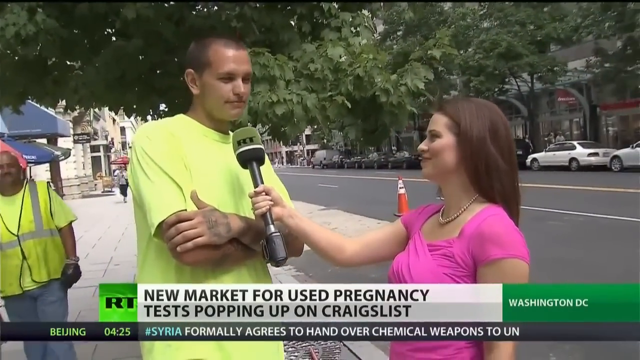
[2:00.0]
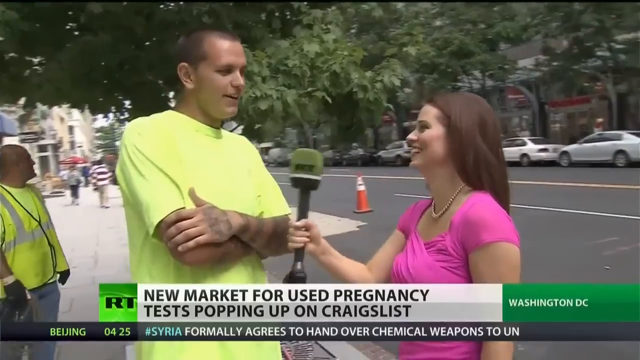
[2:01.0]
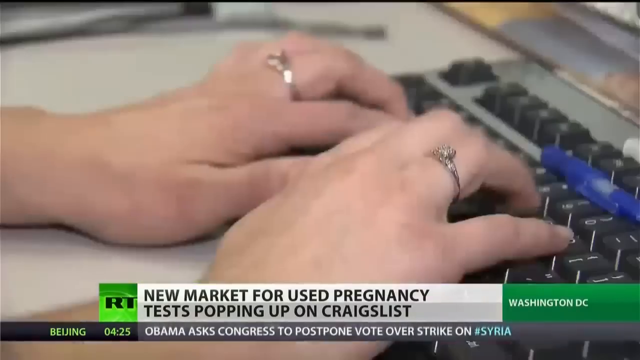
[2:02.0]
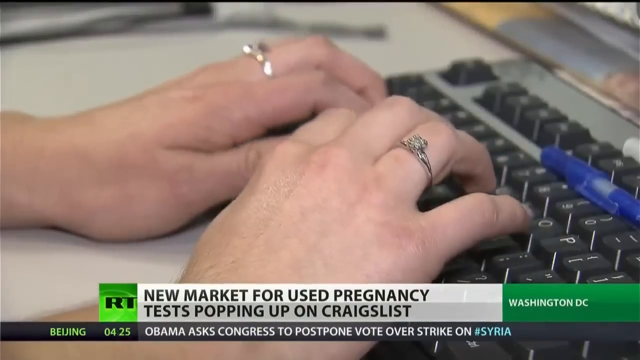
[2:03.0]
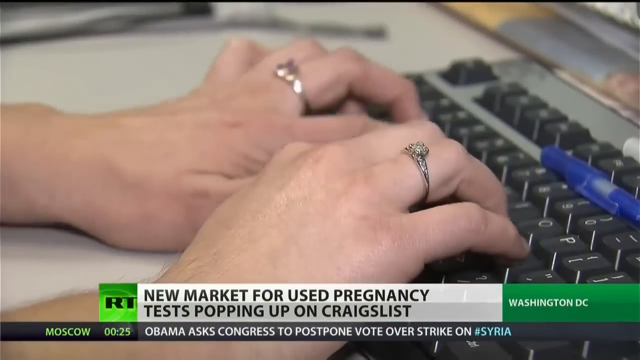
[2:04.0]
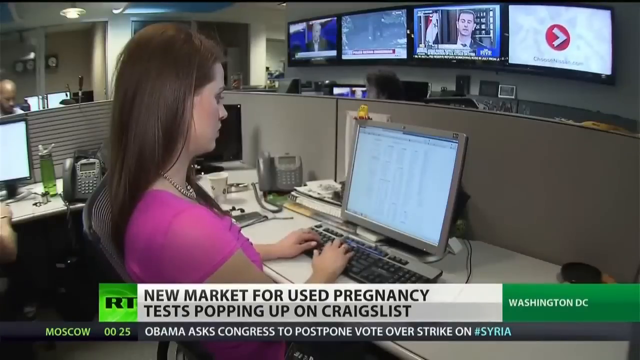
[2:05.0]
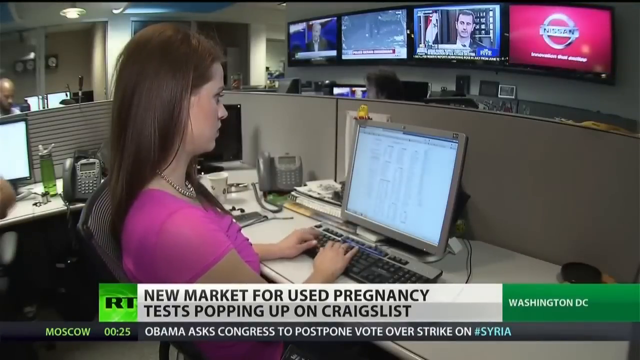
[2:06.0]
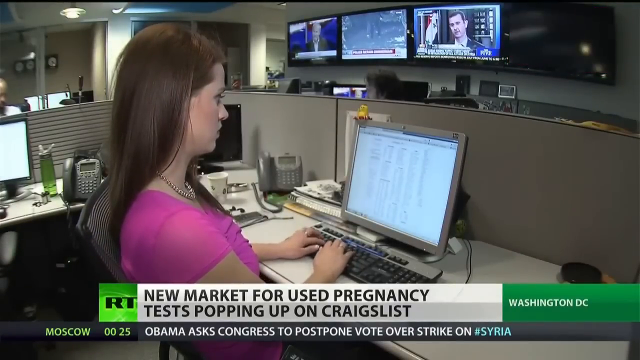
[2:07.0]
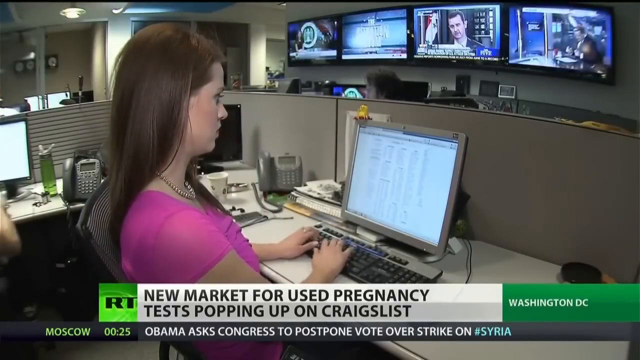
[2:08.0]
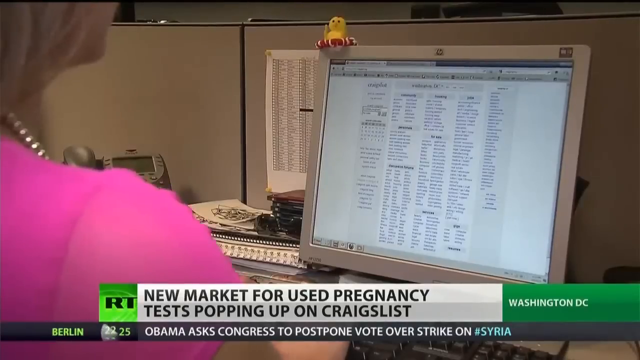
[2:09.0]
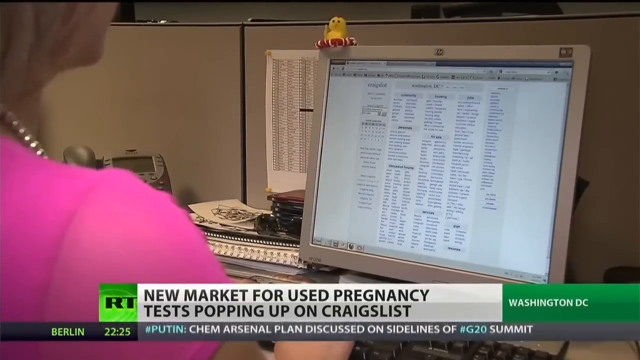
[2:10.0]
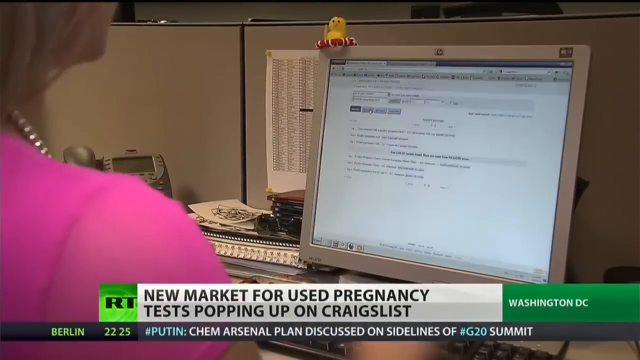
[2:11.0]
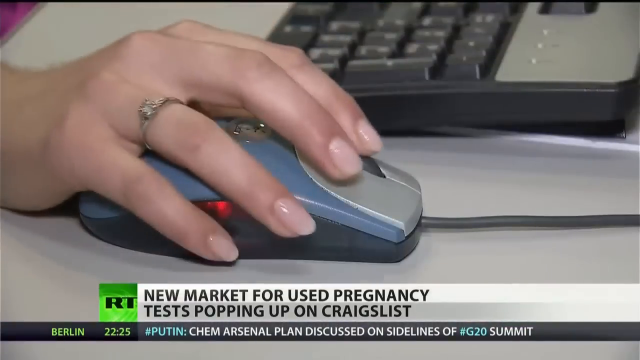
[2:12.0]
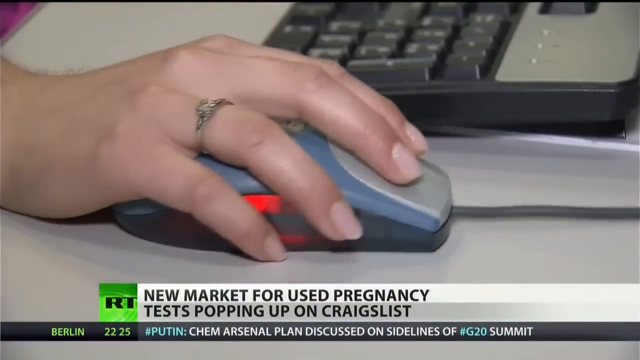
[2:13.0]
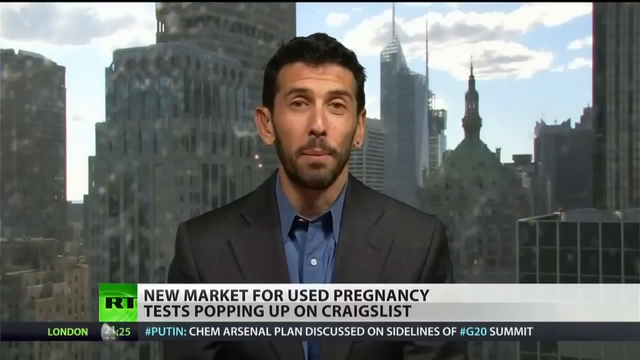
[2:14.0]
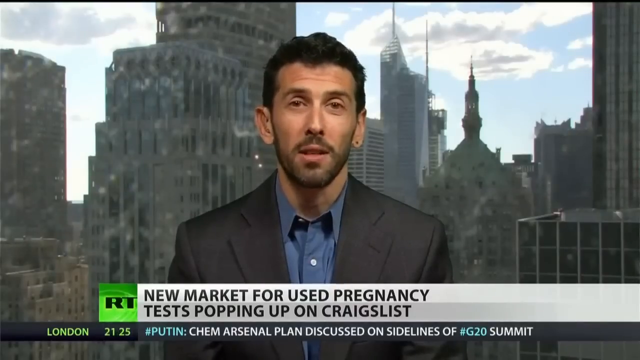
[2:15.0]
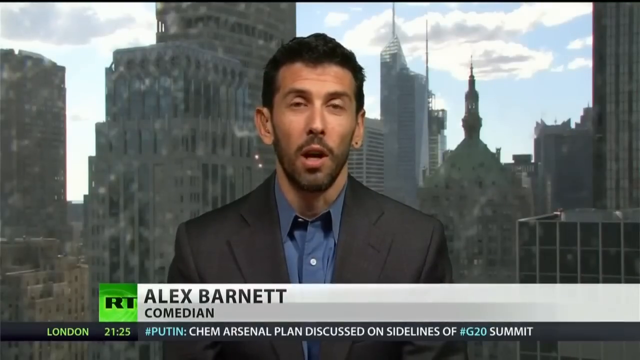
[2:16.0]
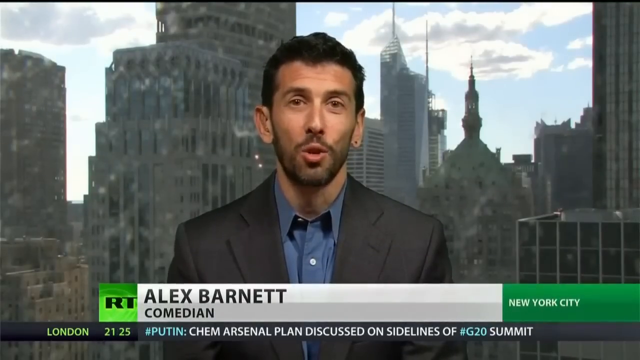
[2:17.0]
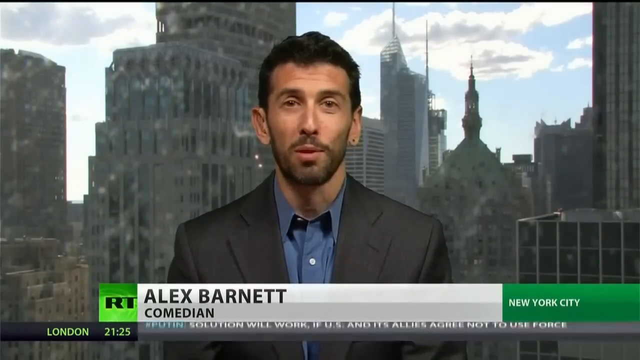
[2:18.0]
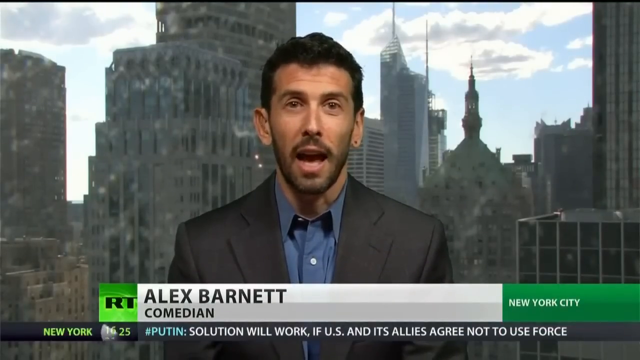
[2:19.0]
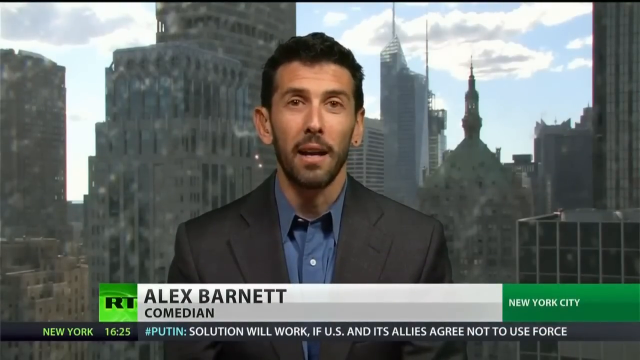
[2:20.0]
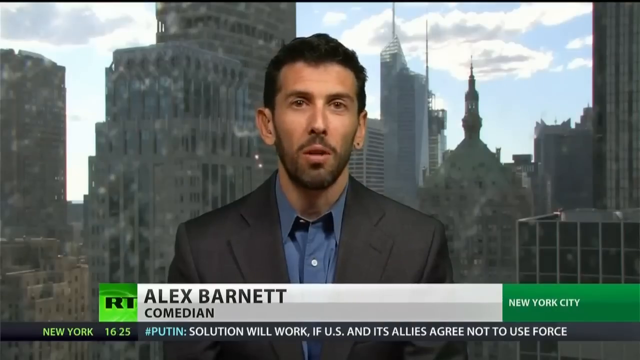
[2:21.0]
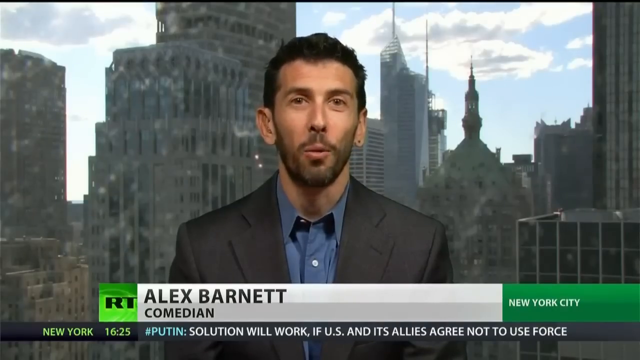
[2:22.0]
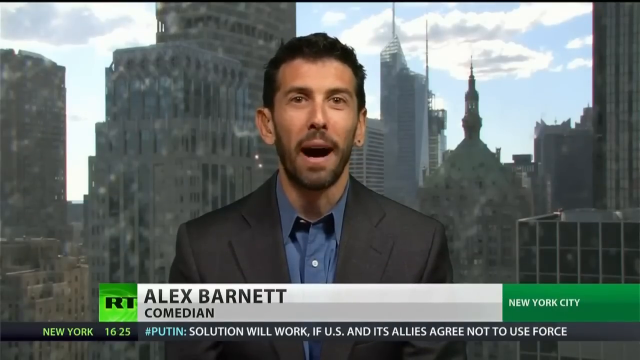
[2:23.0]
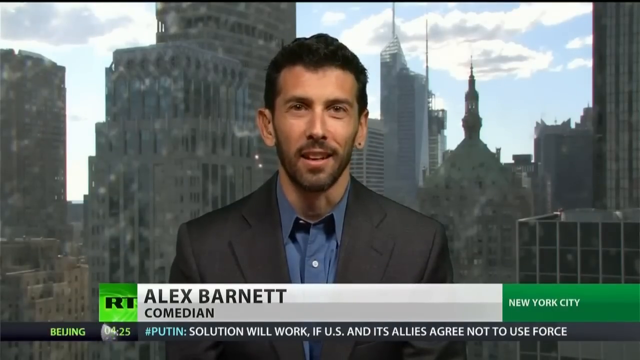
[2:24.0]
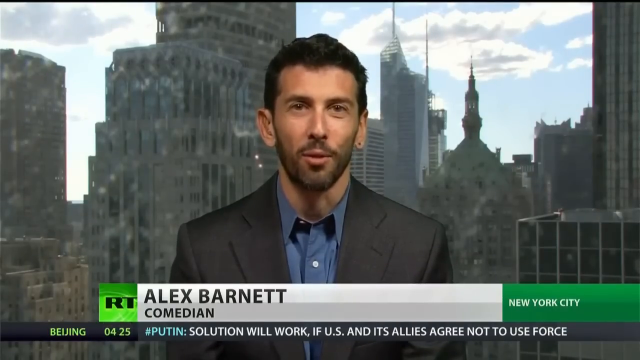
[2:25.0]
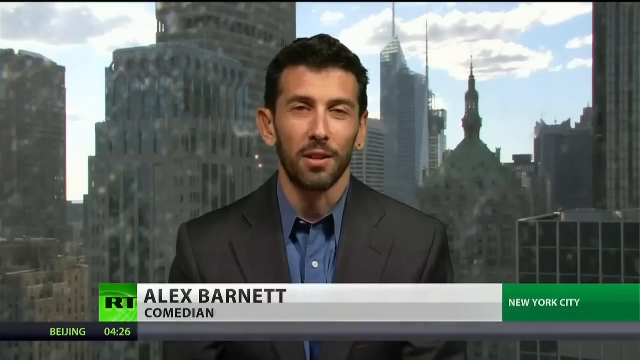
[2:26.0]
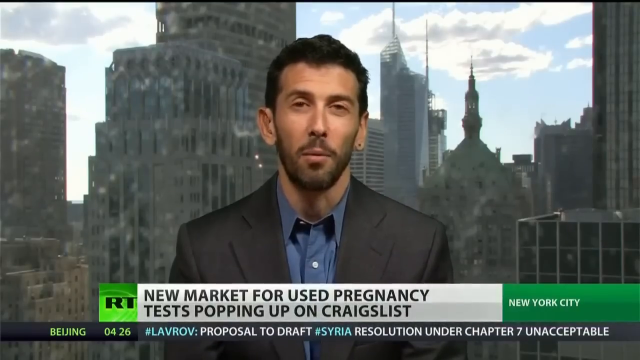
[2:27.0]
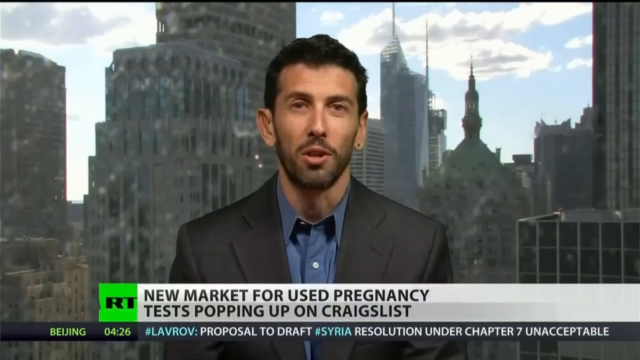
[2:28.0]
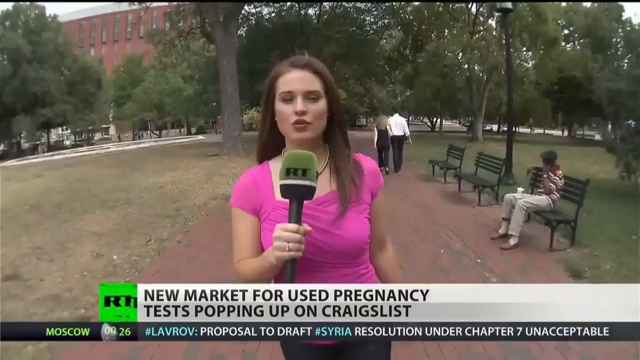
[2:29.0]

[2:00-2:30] A woman in a pink shirt stands on the street on the right, interviewing a man in a yellow shirt on the left; behind him, to the left, is another man in a yellow shirt and a yellow vest. She holds the microphone up in front of the man as he answers. He seems to give a very short answer, and then they both begin to chuckle. The woman is then in an office setting, typing on a keyboard with a computer monitor in front of her. The monitor comes into view, open to a Craigslist webpage, and she reaches down with her right hand and begins manipulating the mouse at her desk. A man in a dark-colored suit then talks in a news studio; text identifies him as Alex Barnett, a comedian, with "New York City" to the right. The ticker below him begins with "Putin" and mentions a plan discussed on the sidelines of the G20 summit, then changes to "Putin: Solutions will work if U.S. and its allies agree not to use force." The woman is then seen walking in a park with the microphone in her hand.